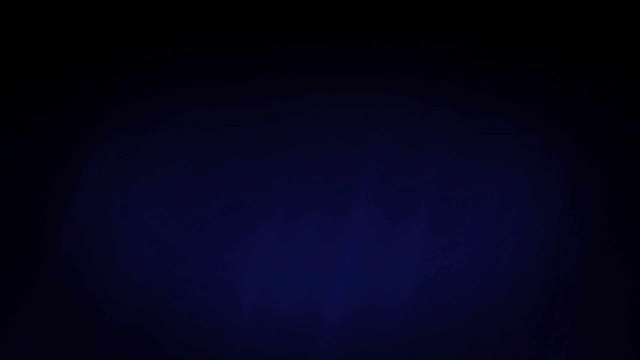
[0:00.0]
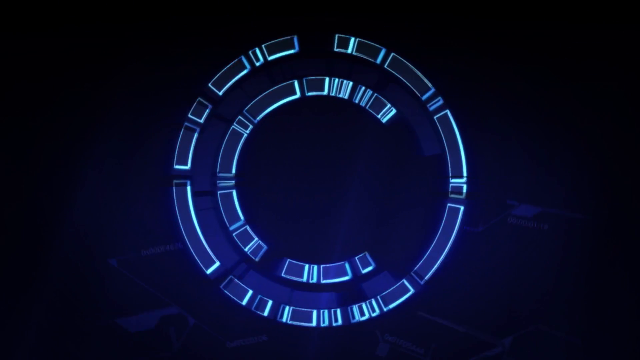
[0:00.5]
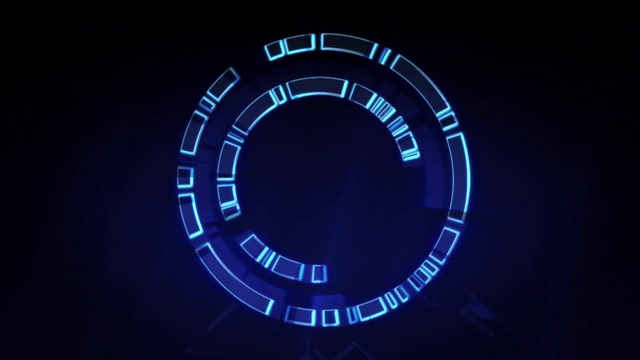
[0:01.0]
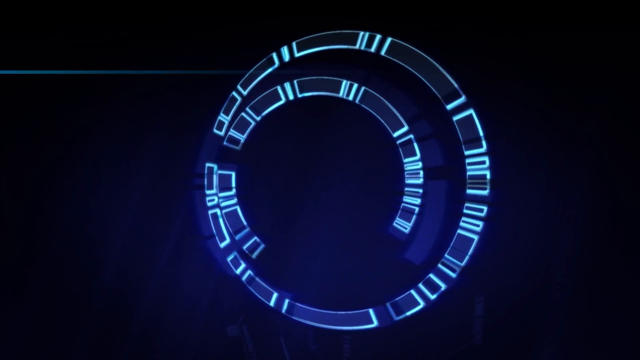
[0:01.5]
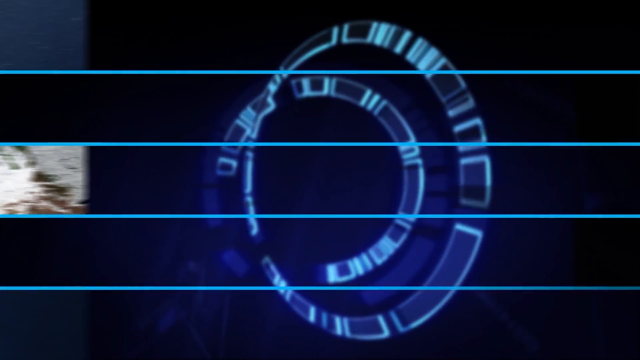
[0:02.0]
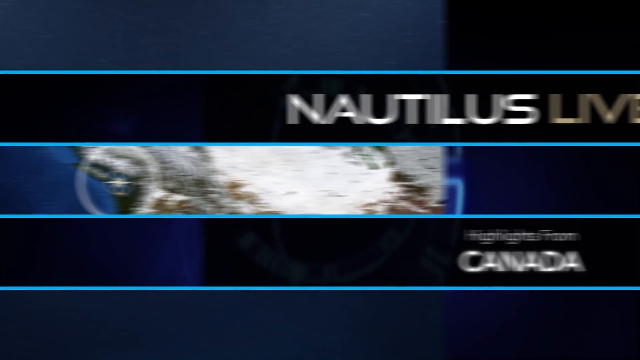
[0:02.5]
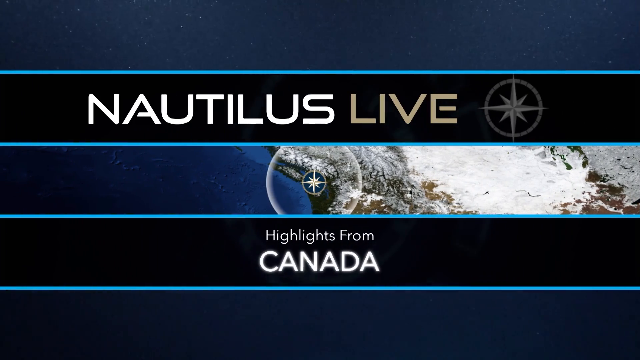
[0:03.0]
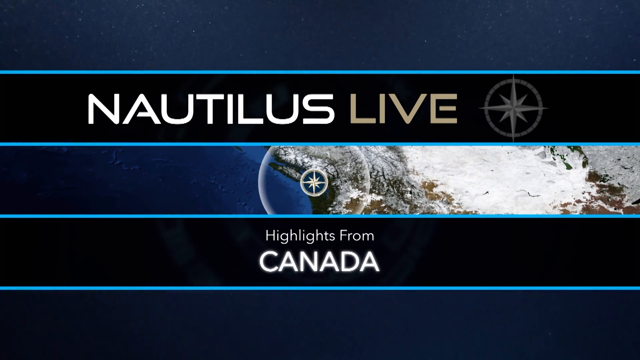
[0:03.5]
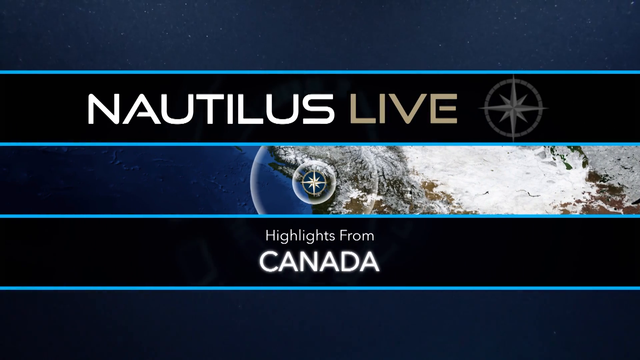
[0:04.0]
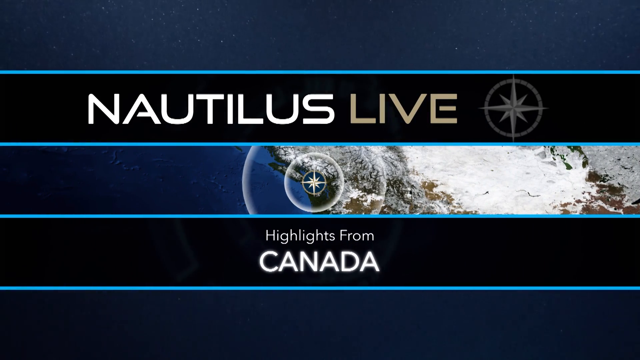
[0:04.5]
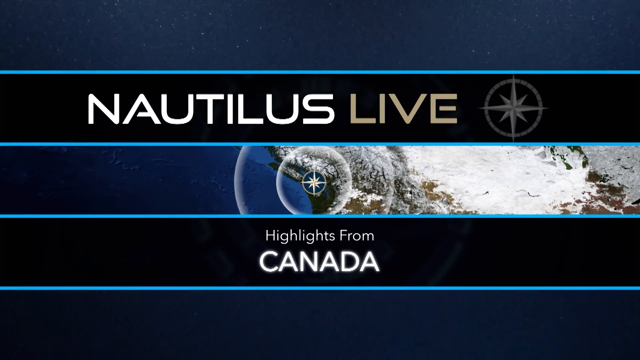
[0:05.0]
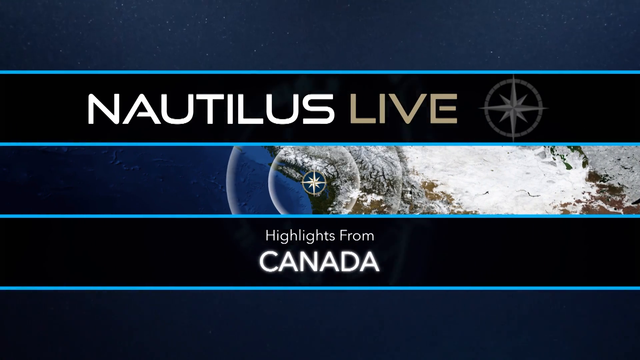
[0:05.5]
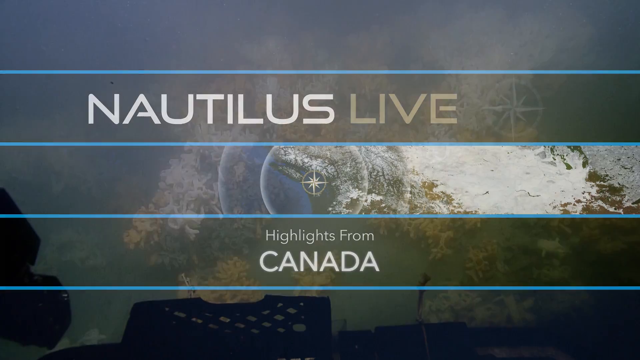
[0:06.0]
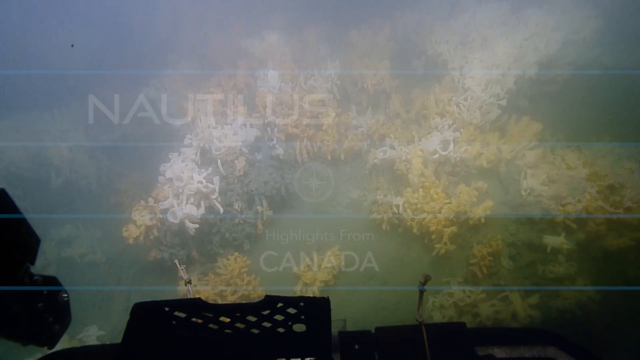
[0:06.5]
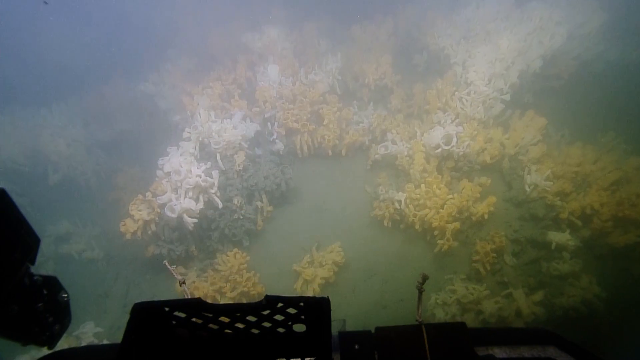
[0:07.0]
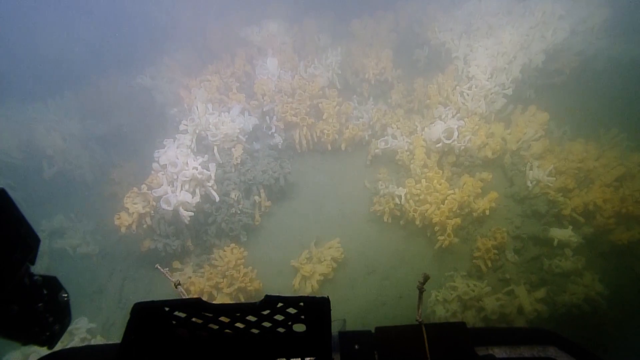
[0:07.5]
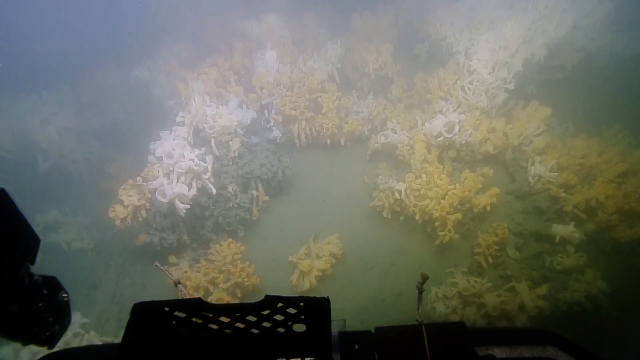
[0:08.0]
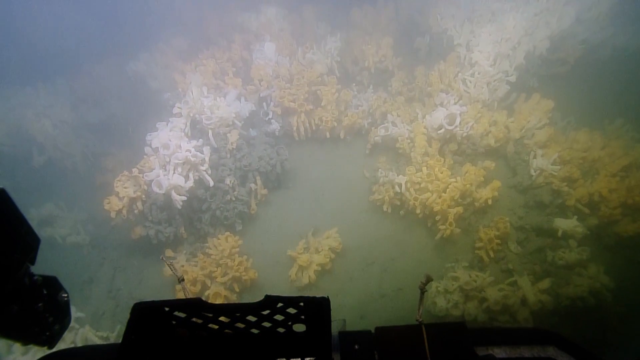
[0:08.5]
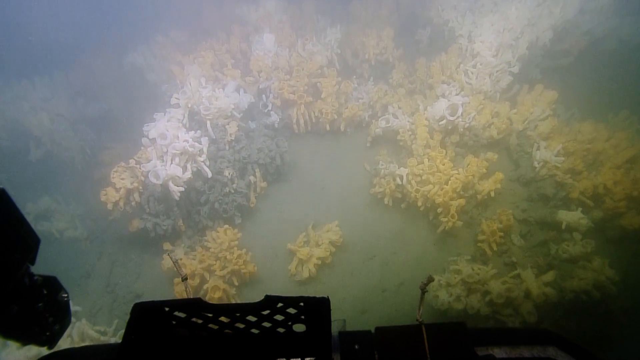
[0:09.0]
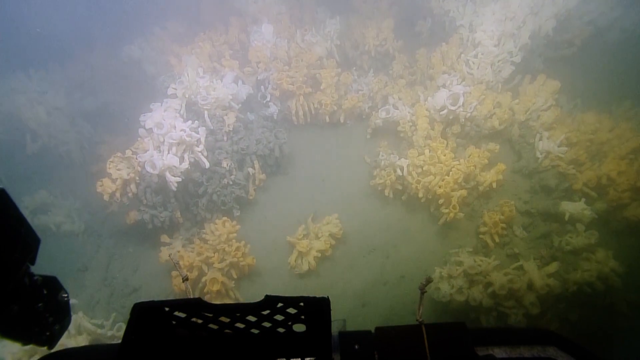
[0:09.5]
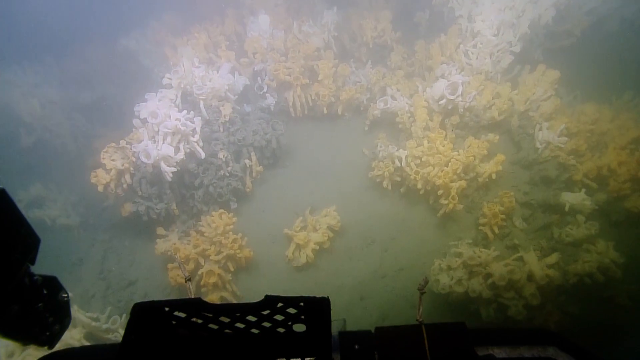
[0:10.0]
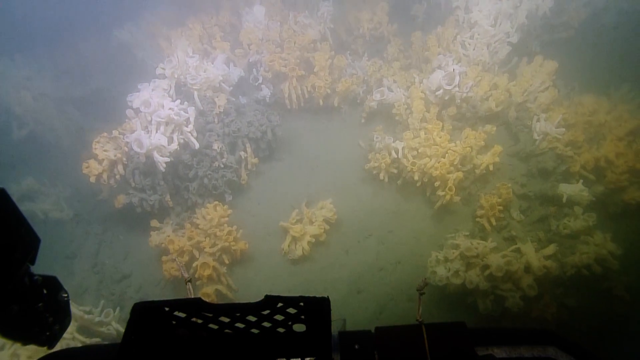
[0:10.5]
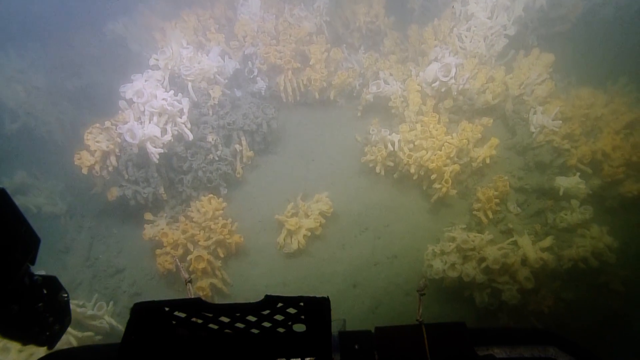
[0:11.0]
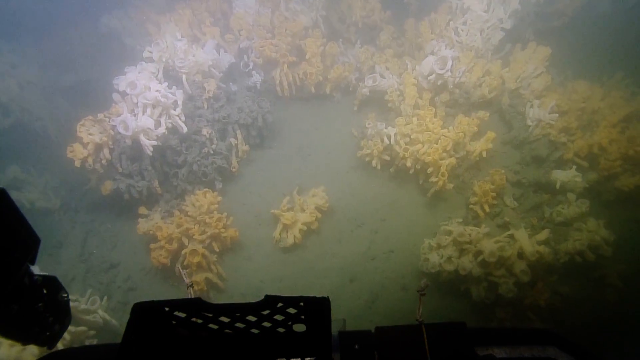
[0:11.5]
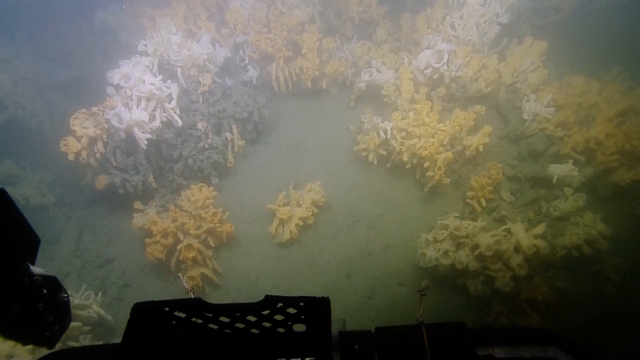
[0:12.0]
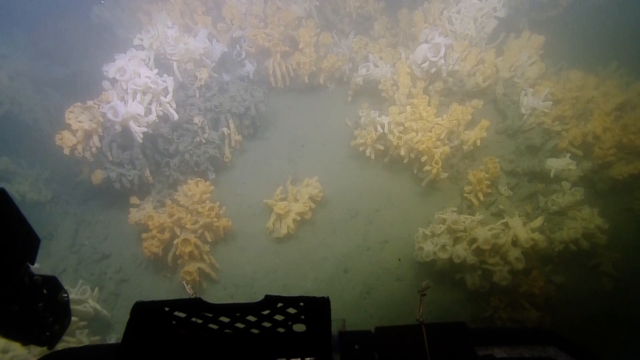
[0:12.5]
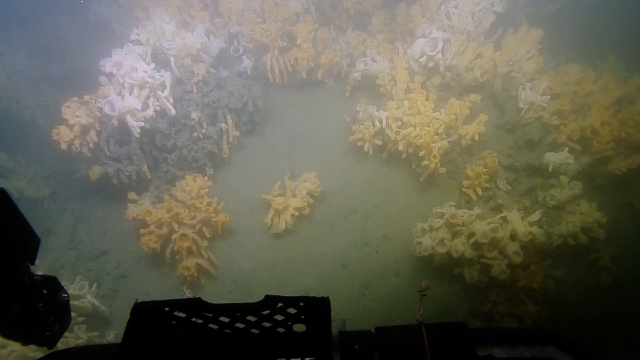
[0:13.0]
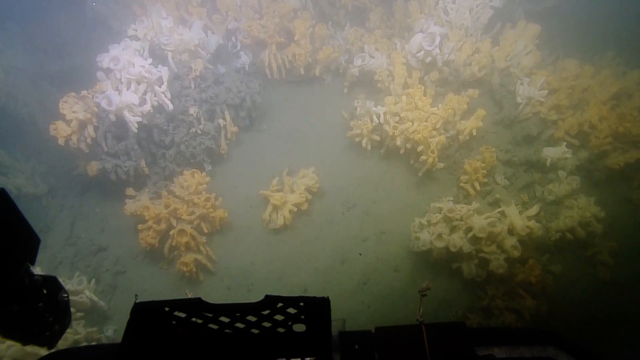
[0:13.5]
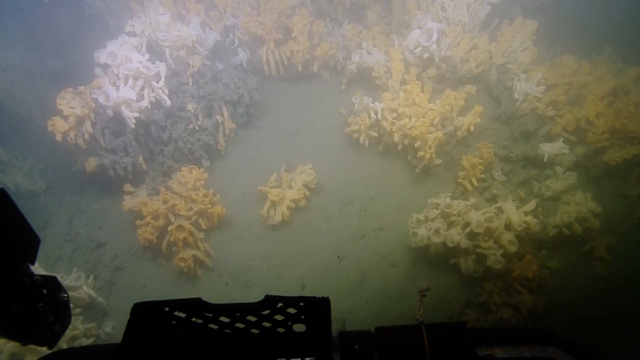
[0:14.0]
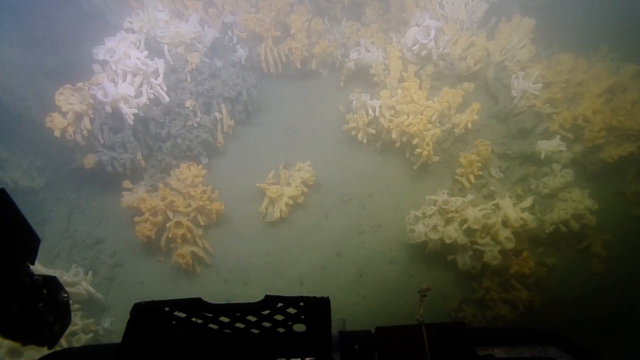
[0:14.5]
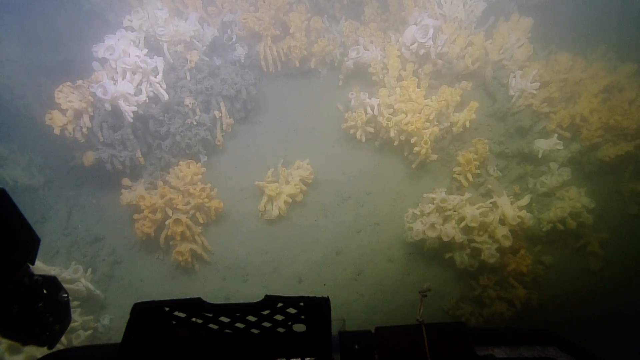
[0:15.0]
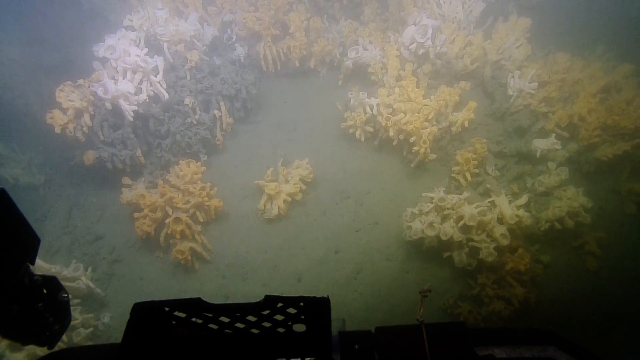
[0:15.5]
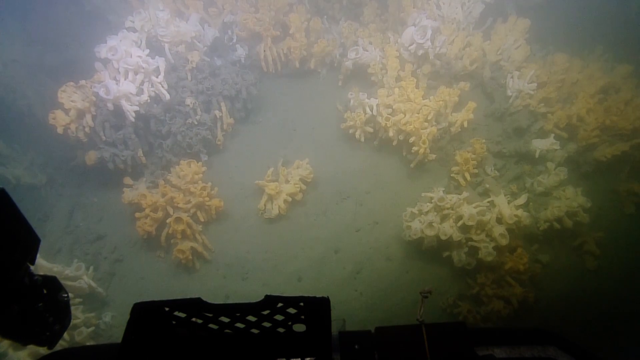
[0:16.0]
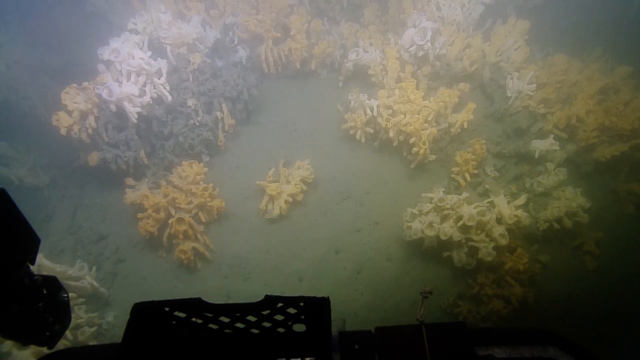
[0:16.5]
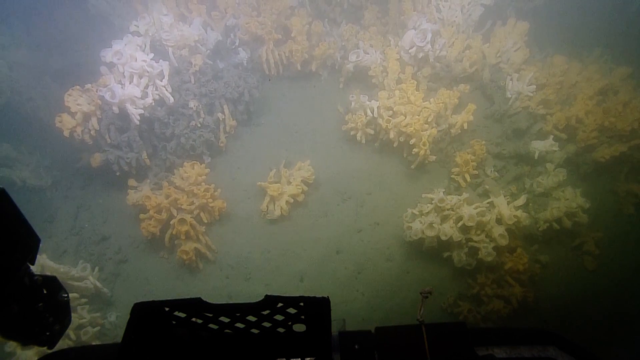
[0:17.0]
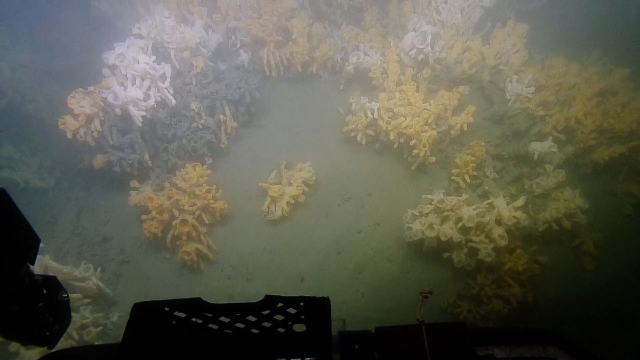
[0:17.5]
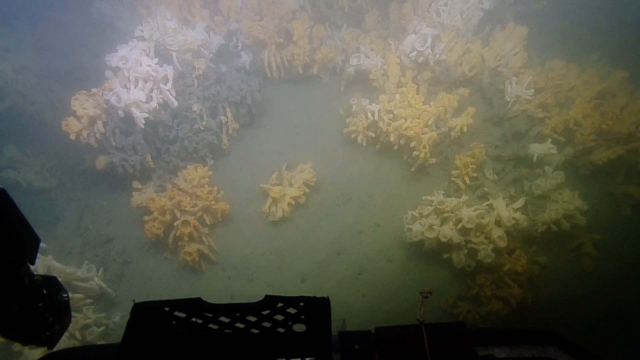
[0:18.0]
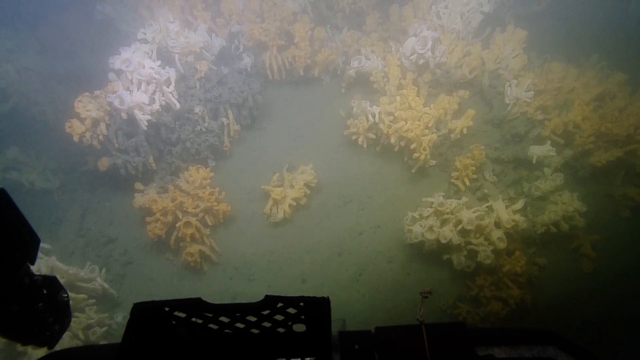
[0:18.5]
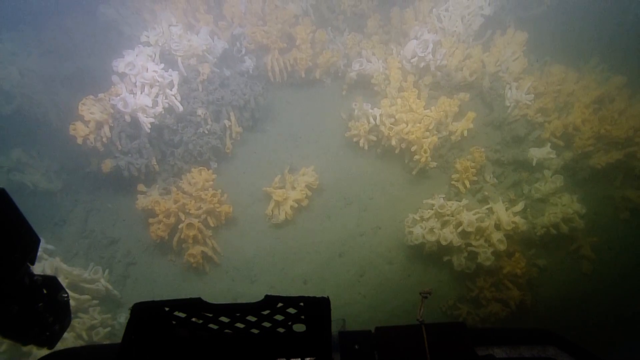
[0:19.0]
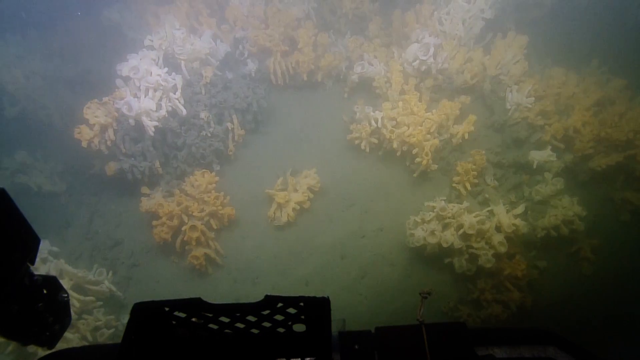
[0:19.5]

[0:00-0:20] The video opens on a black screen with a dark navy blue tint. An animated logo comes onto the screen from the front: two large circles spin counterclockwise in the center of the screen. The circles are made of long rectangles lined with bright blue and white, and their centers show the dark blue and black background, as if they were transparent. The animation transitions into long teal horizontal lines that come onto the screen from right to left. Four teal lines line the rectangles, which have a black background with text inside them; the text is large and in all caps. The top center box reads 'Nautilus Live', with a logo of a star surrounded by a circle at the end of the text. In the next rectangle below is a live satellite shot of the earth. In the center of this earth shot is the star-and-circle logo, as if marking where the Nautilus submarine is located, and animated circles move outward away from the logo like a sonar ping showing the submarine's location. In the next rectangle, small text reads 'highlights from', and then, as if return were pressed on a keyboard, text in all caps reads 'Canada'. The video then transitions to live footage of the ocean floor, apparently from a submarine, looking onto a blurry coral reef in white and extremely light orange against a light blue background. The image is very blurry and almost smoky, and the submarine gets closer, looking down at the sea floor.